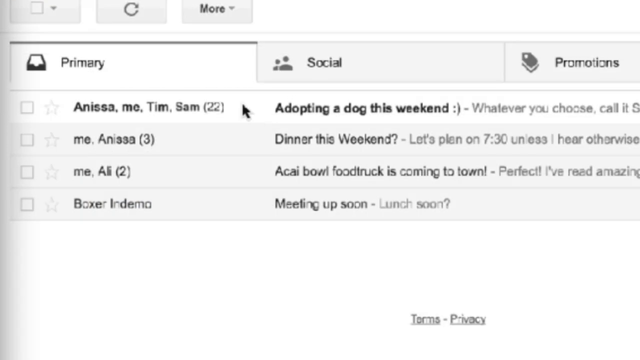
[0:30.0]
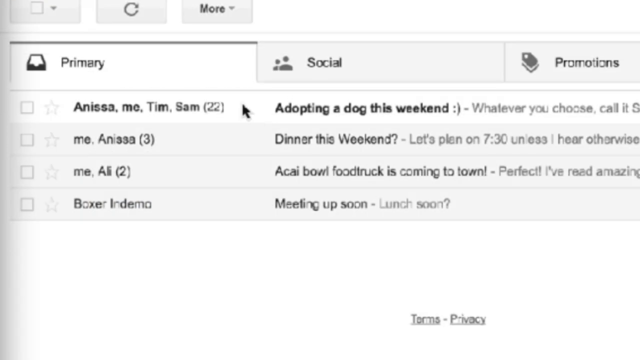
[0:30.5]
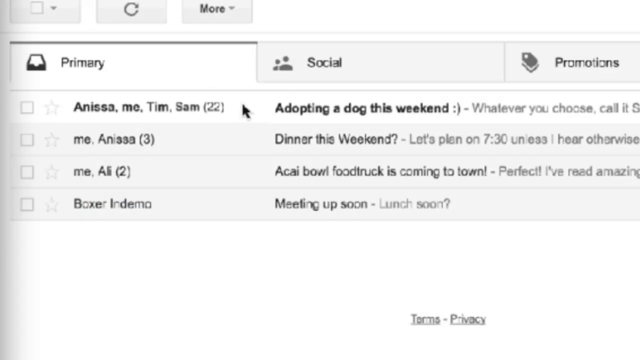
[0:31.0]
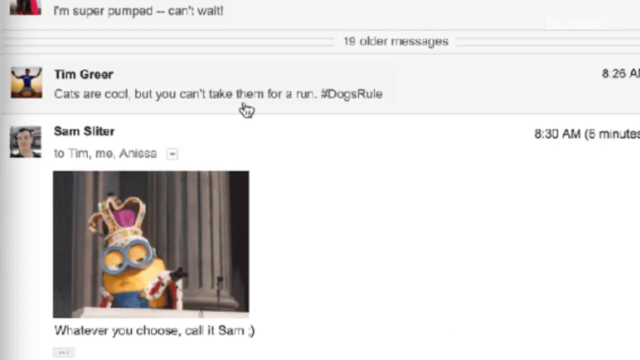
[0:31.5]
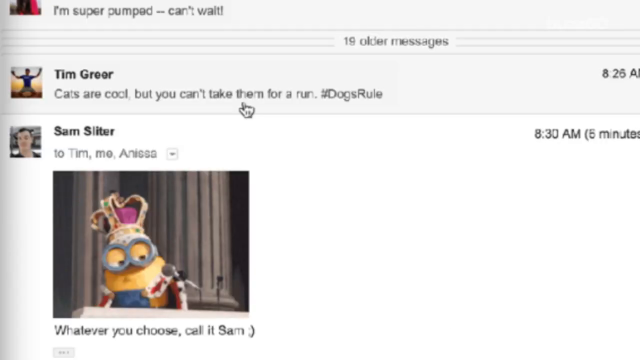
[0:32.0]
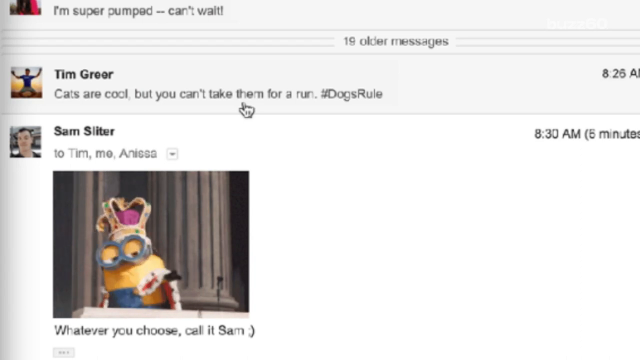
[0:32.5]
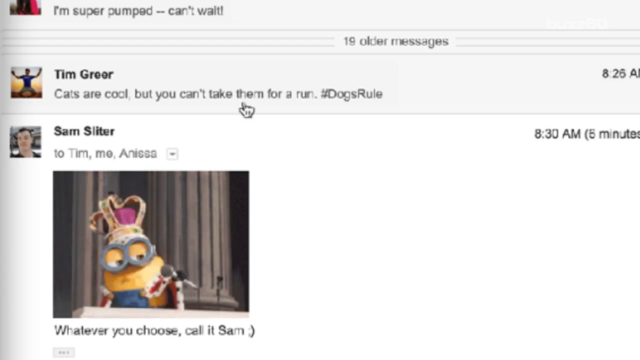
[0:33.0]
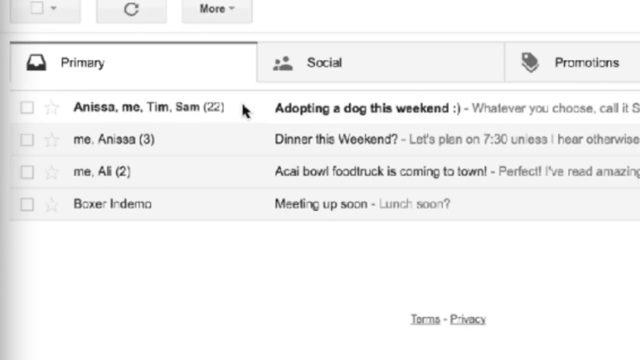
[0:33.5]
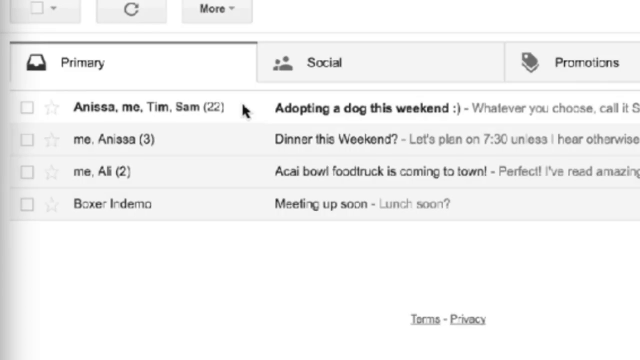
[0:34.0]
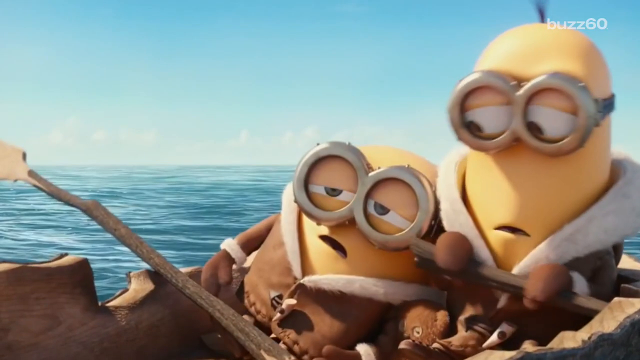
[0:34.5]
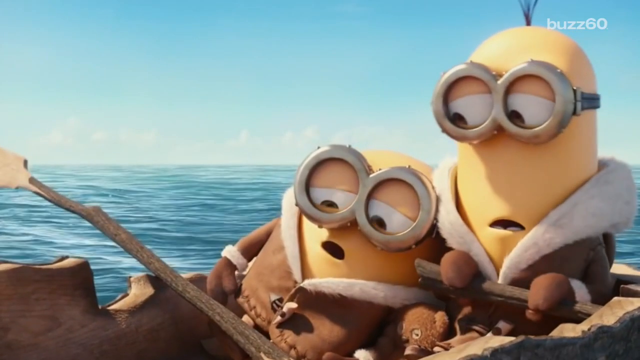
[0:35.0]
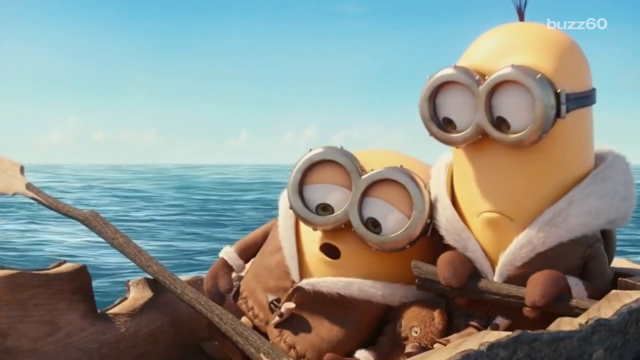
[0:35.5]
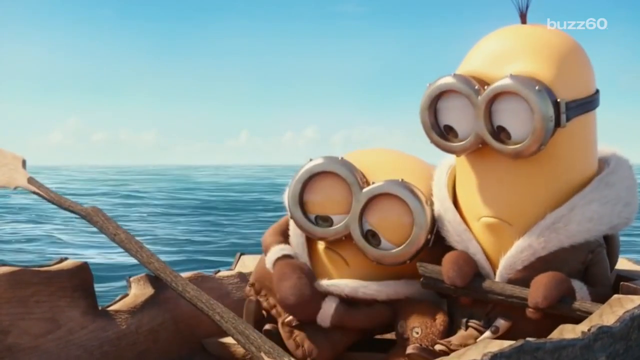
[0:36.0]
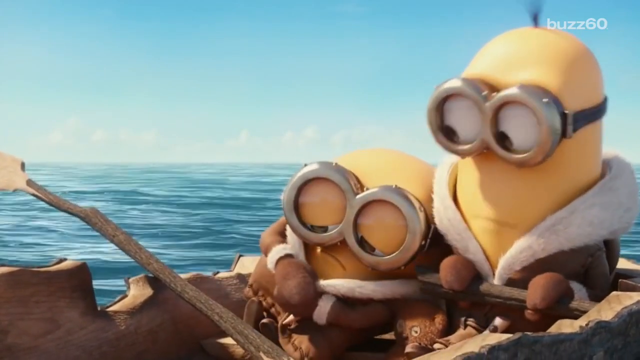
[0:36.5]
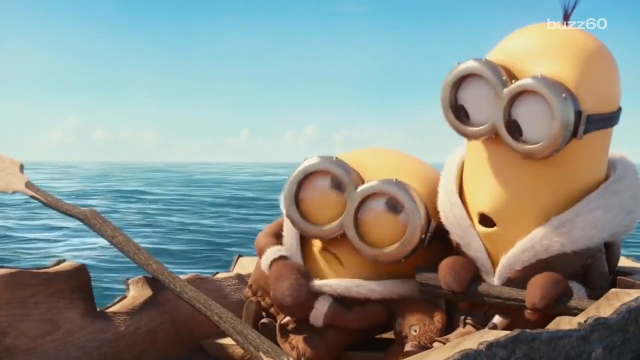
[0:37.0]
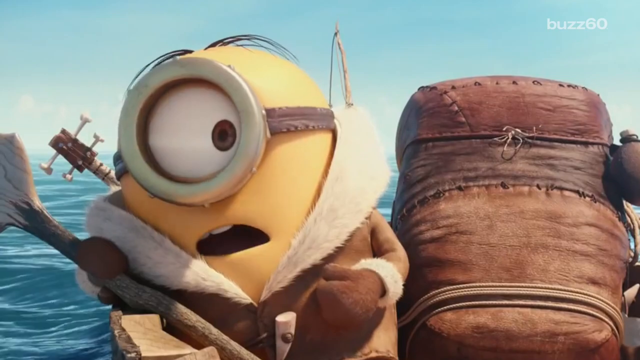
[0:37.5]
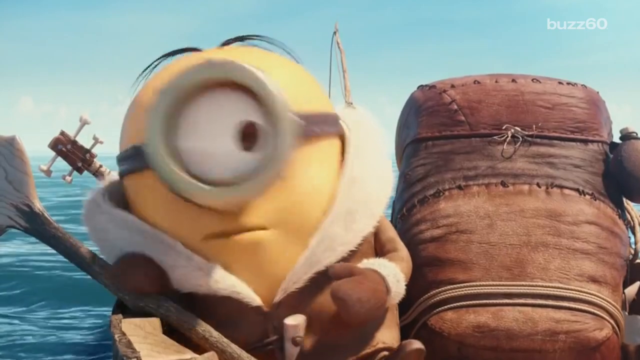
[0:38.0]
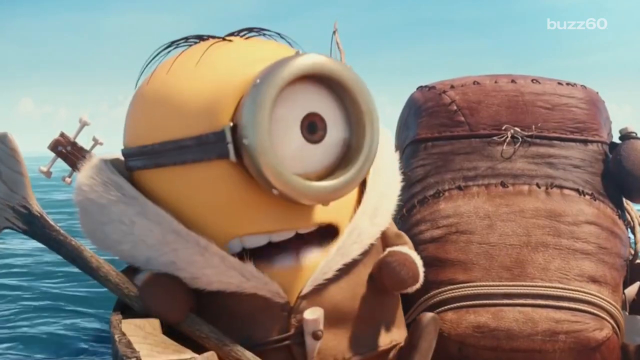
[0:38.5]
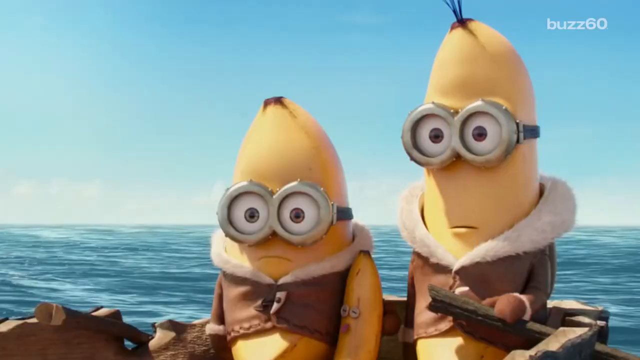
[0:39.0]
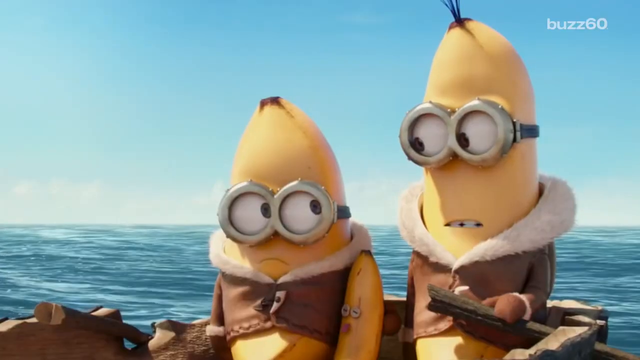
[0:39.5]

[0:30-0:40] A small minion appears with a crown, followed by two minions on a boat on the sea; one has one eye and the other has two. A Gmail inbox preview appears with the tabs primary, social and promotions. Emails show "Anissa, me, Tim", "Sam" with "22 messages", and "me" with three messages under "dinner this weekend", including "Let's plan on 730 unless I hear otherwise." Other messages read "adopting a dog this weekend", "whatever your choice", "kibble food truck is coming to town", "Perfect", "Meeting up soon" and "lunch soon". Everything moves very quickly.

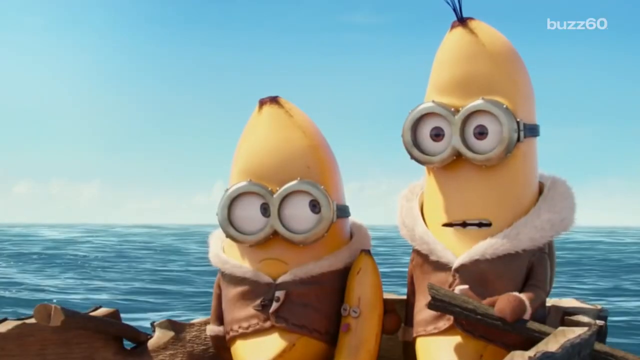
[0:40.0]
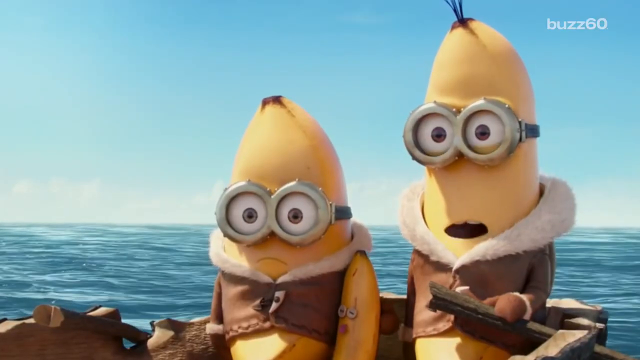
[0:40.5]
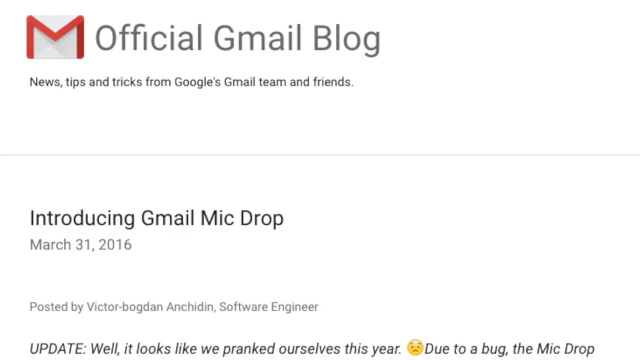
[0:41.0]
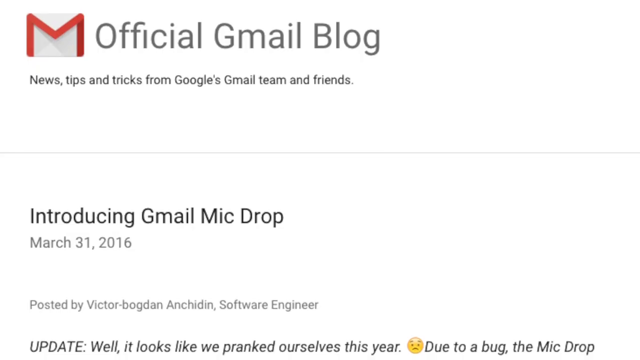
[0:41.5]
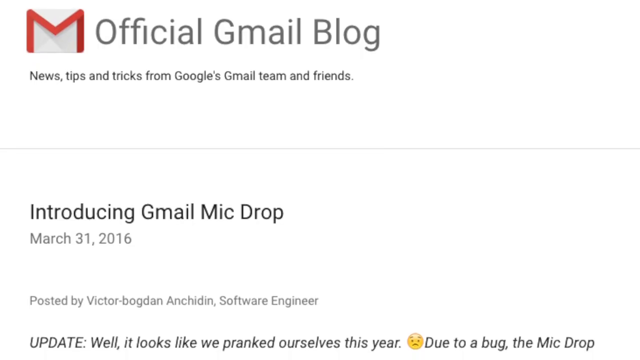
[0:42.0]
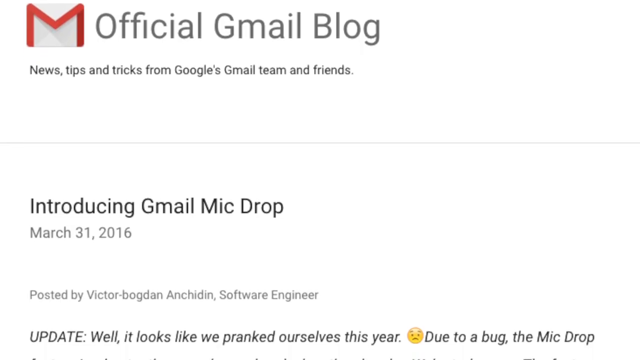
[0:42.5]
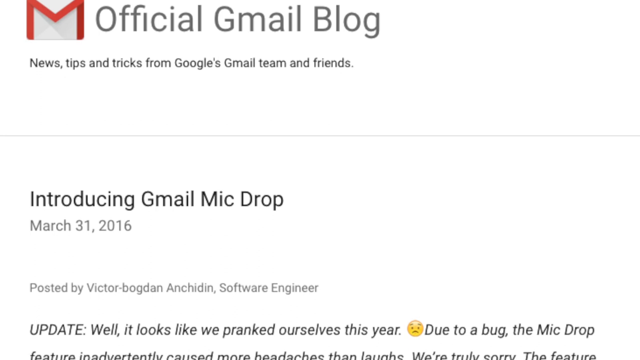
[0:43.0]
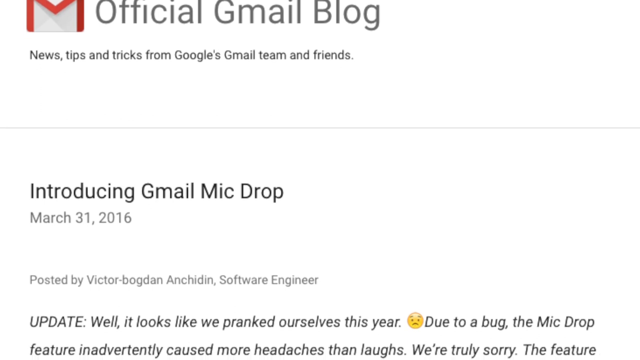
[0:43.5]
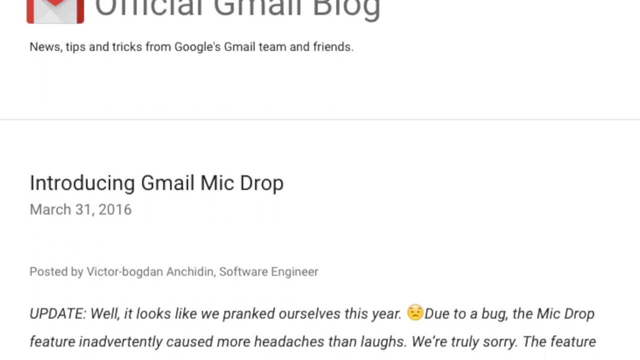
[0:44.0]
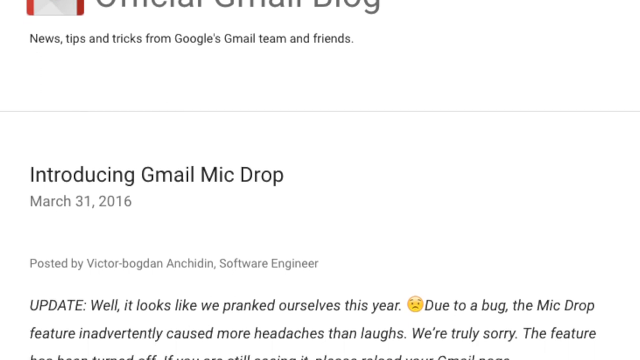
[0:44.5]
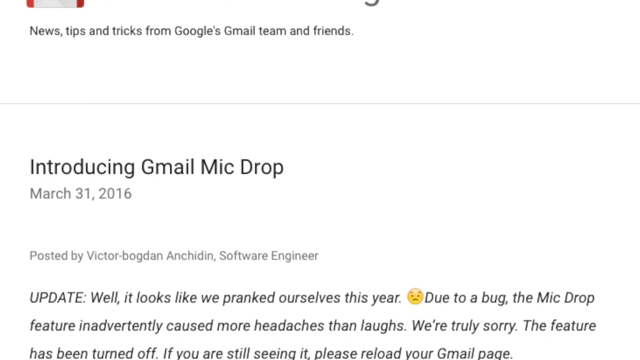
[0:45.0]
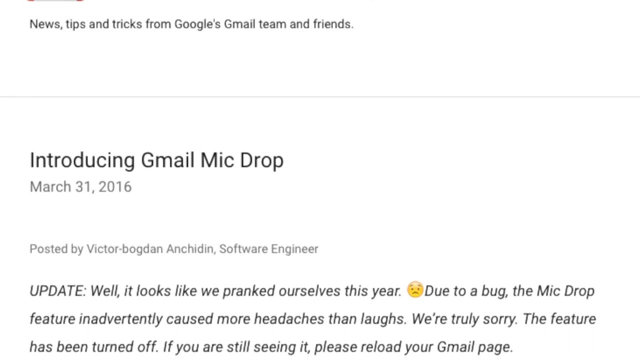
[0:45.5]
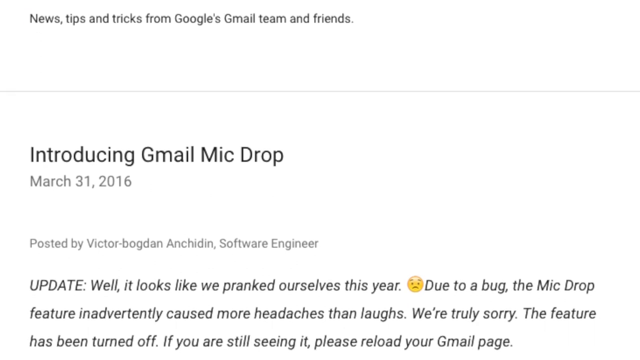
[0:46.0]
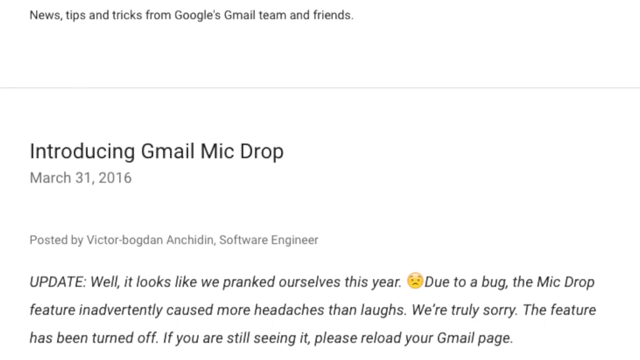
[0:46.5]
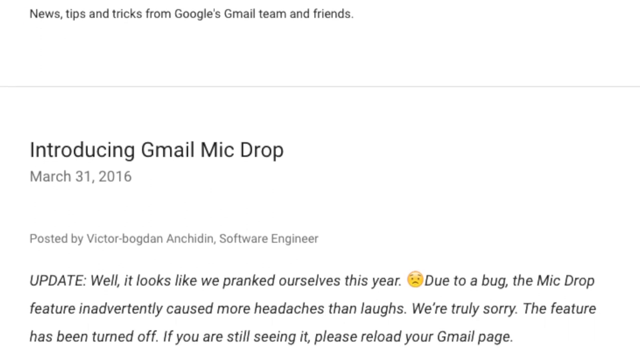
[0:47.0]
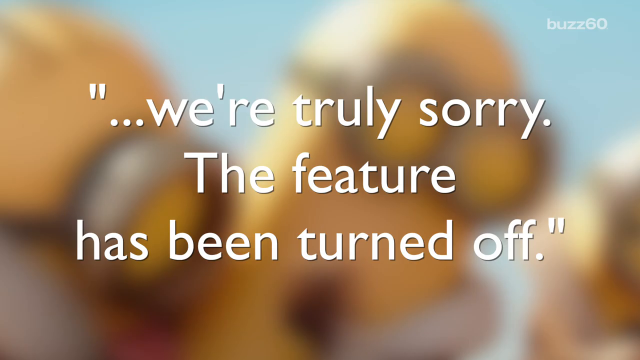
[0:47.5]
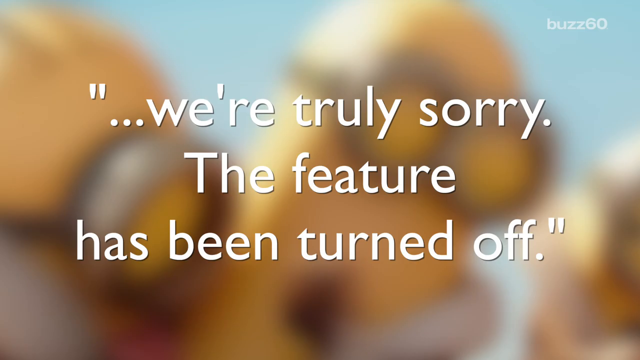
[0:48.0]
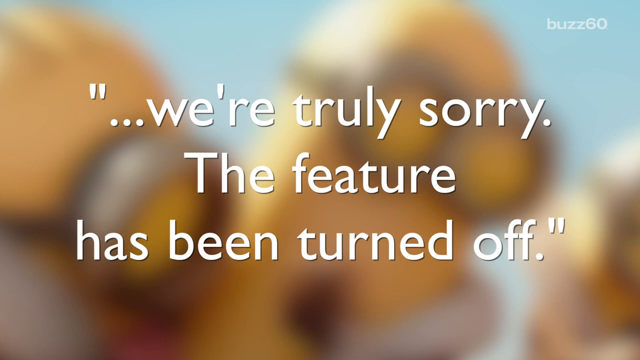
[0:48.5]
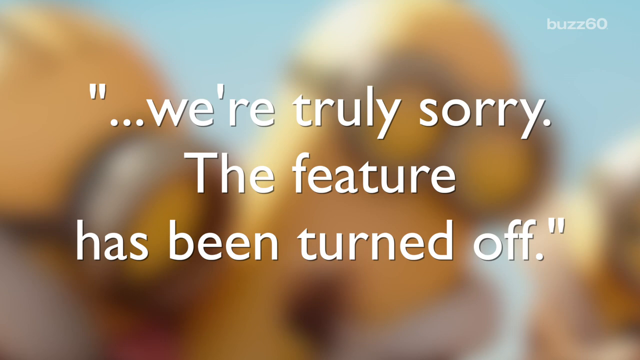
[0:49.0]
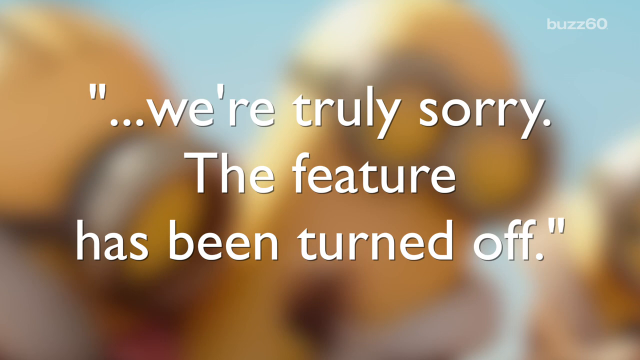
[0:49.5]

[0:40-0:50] A page reads "official gmail blog", "Introducing gmail mic drop", "March 31st" and "We're truly sorry. The feature has been turned off." The minions are on a boat in the ocean, looking upset, with a shocked face on the one on the right. They look like bananas and wear goggles with their eyes inside them, along with brown jackets that have a fur-like, cottony collar. Text then reads "update" and "Well, it looks like we pranked ourselves this year."